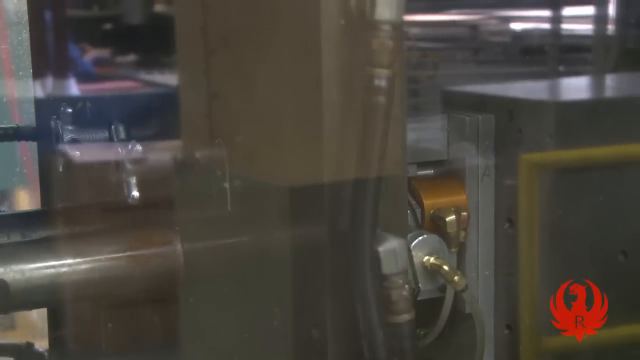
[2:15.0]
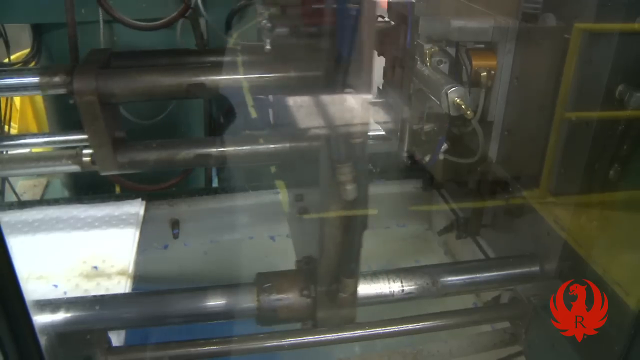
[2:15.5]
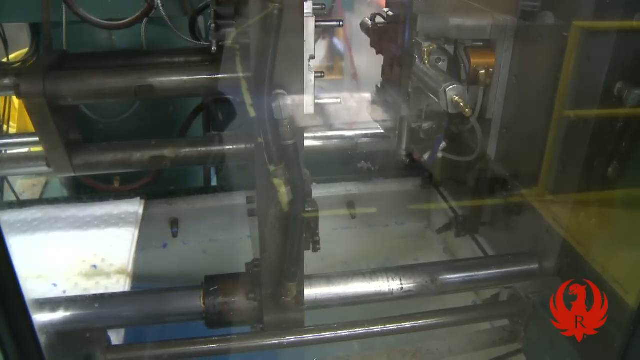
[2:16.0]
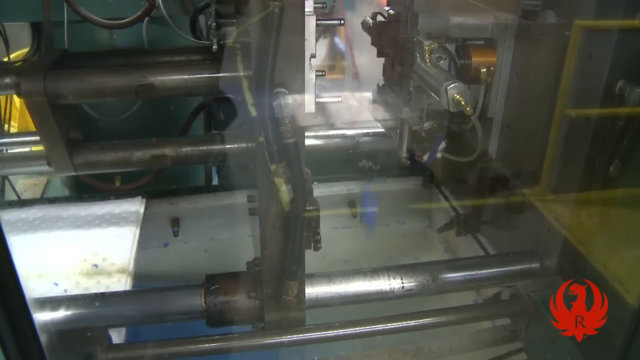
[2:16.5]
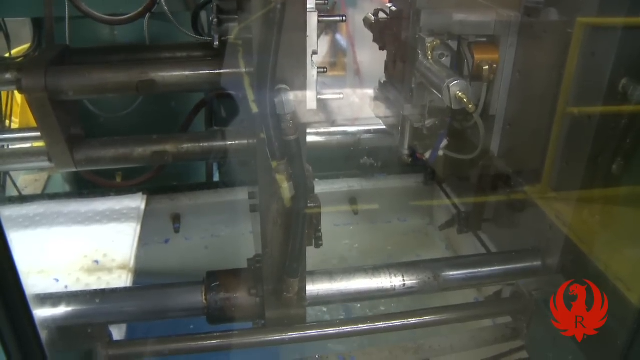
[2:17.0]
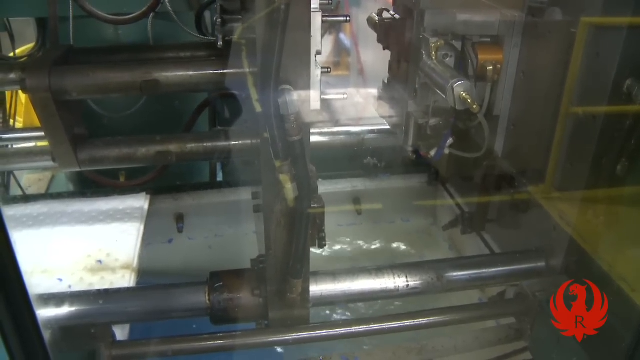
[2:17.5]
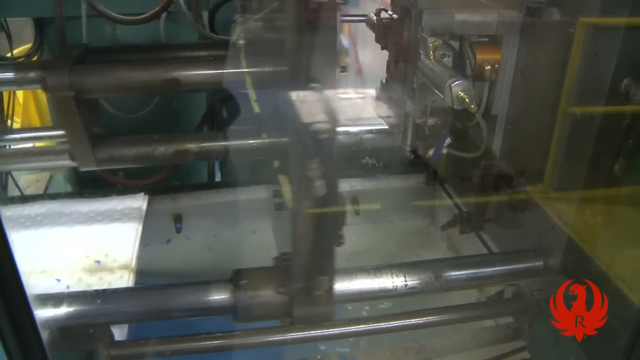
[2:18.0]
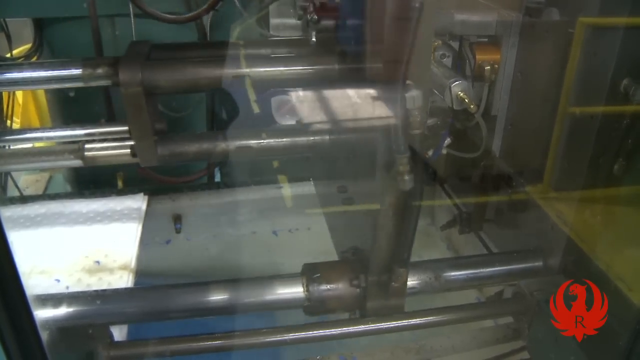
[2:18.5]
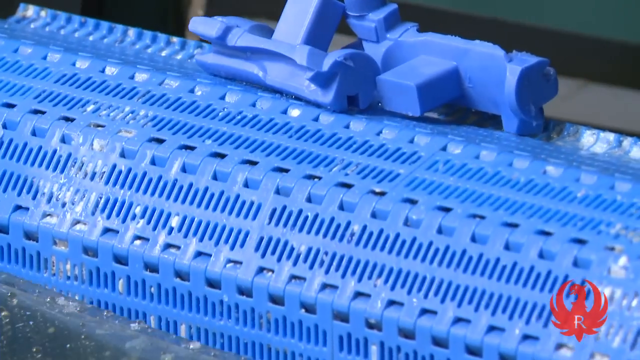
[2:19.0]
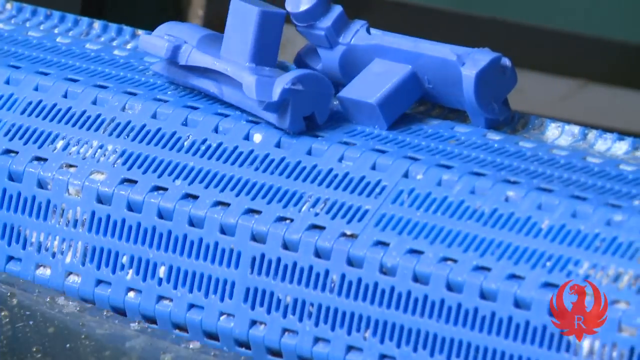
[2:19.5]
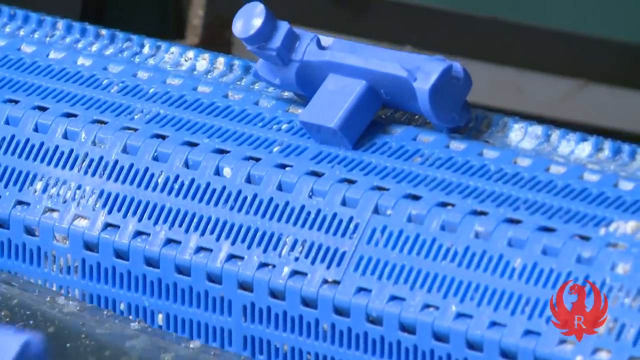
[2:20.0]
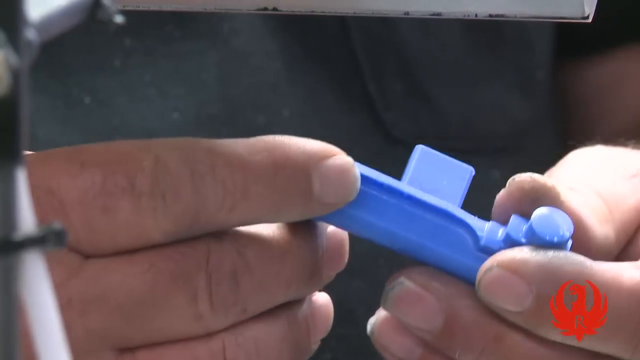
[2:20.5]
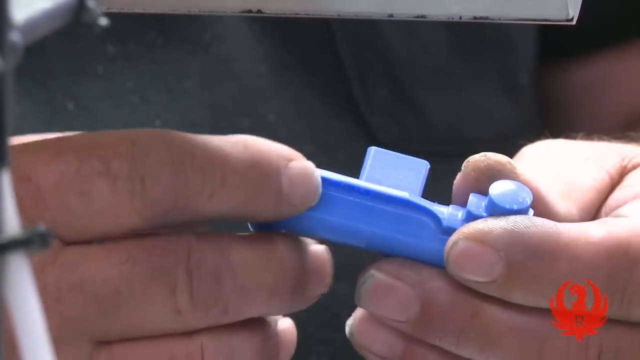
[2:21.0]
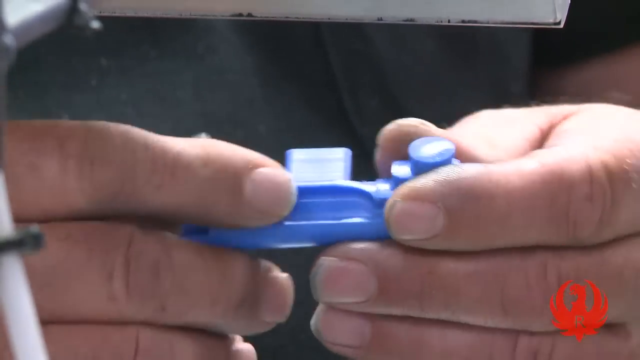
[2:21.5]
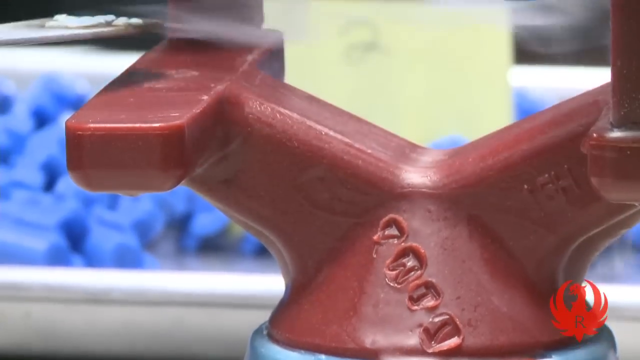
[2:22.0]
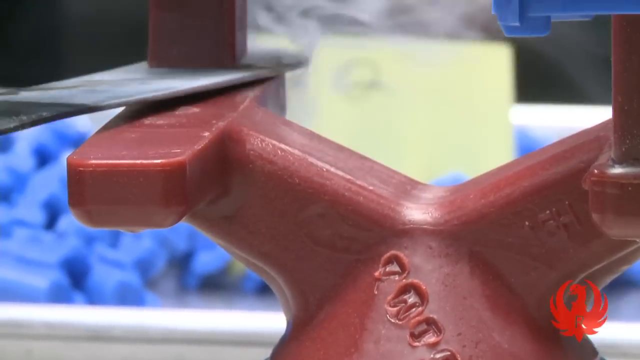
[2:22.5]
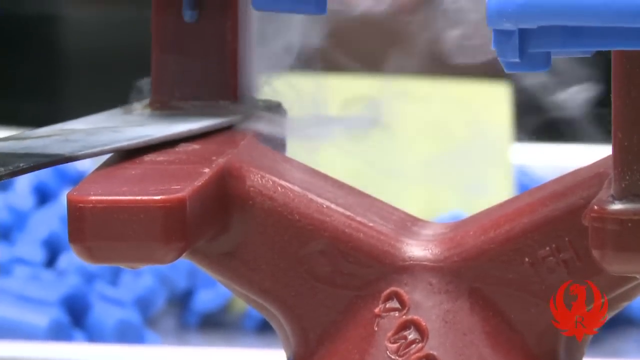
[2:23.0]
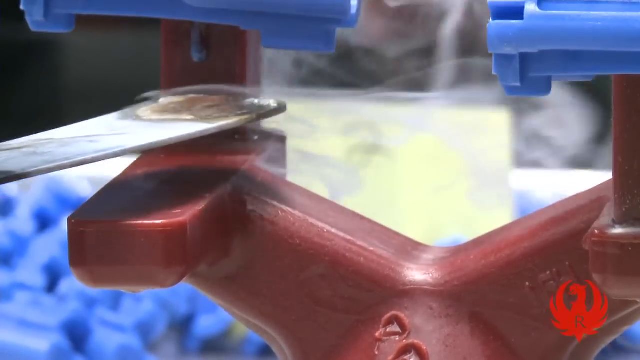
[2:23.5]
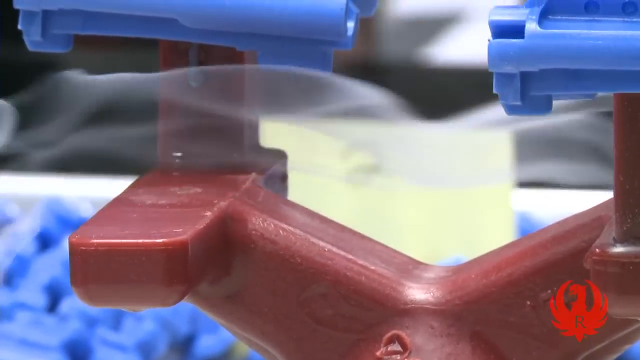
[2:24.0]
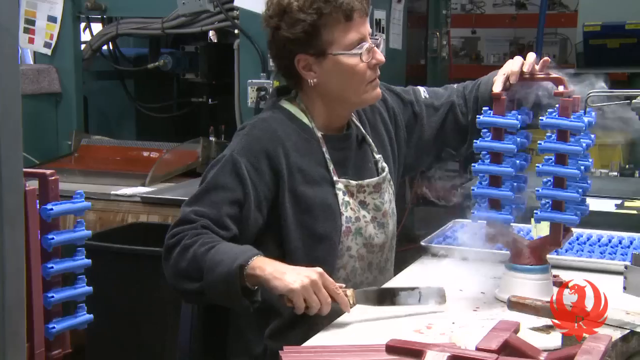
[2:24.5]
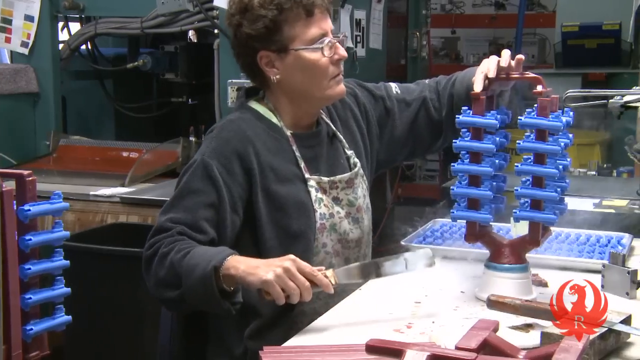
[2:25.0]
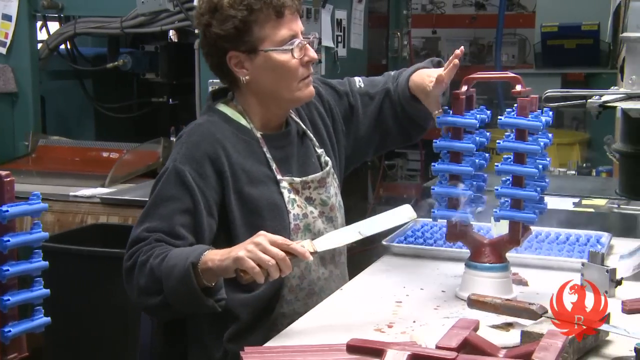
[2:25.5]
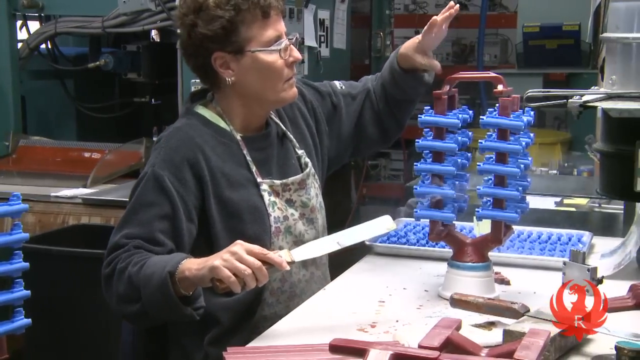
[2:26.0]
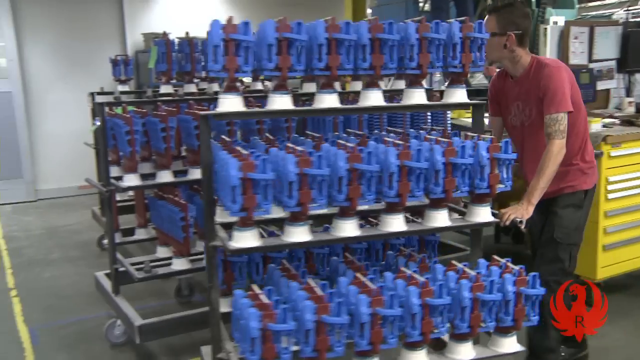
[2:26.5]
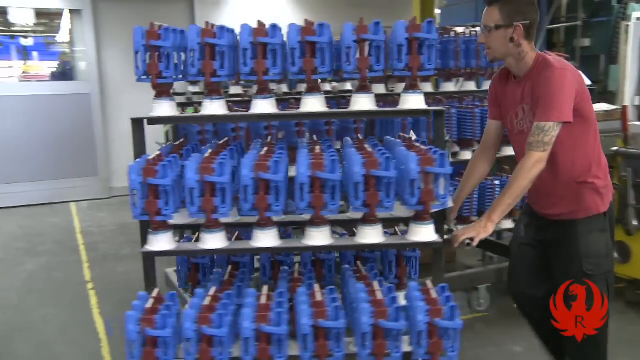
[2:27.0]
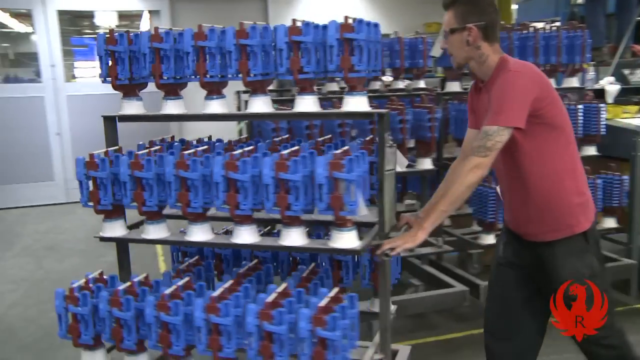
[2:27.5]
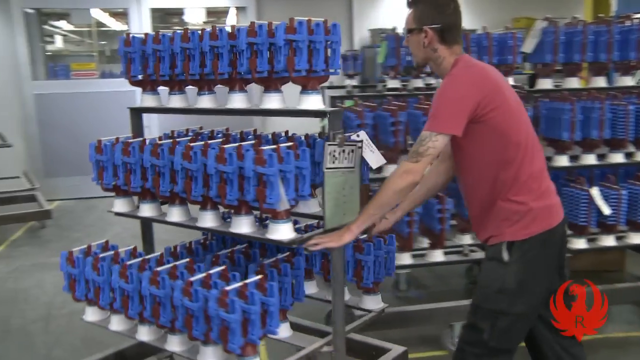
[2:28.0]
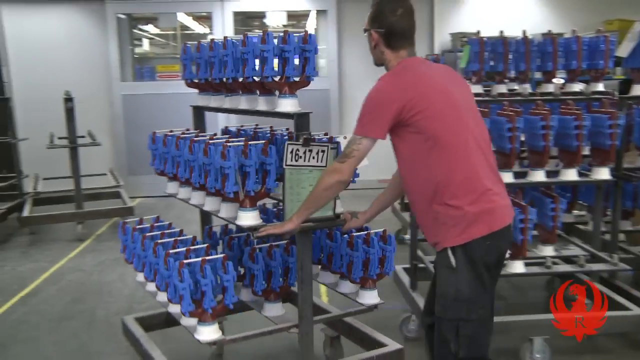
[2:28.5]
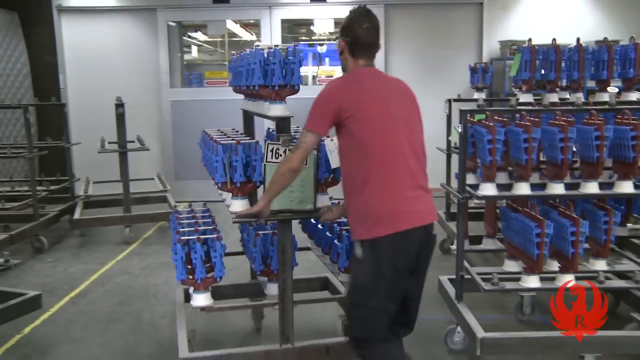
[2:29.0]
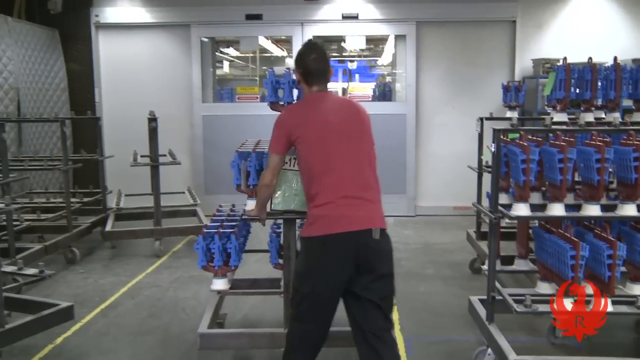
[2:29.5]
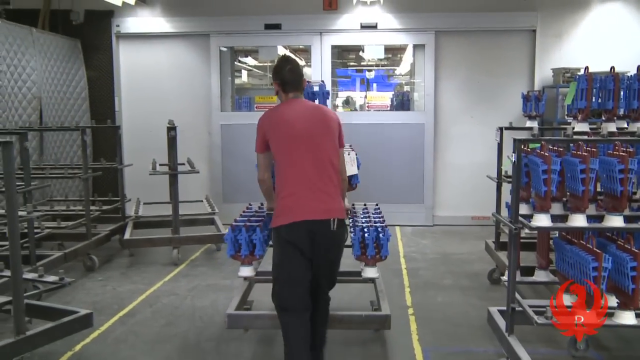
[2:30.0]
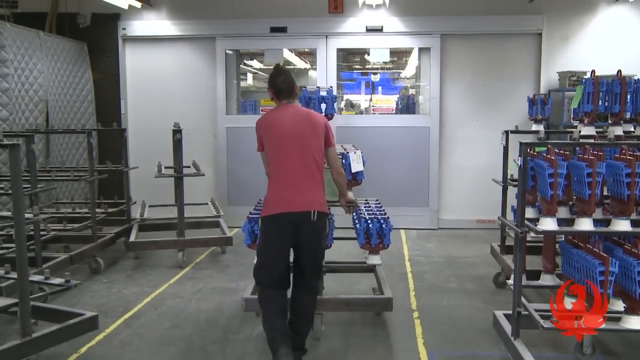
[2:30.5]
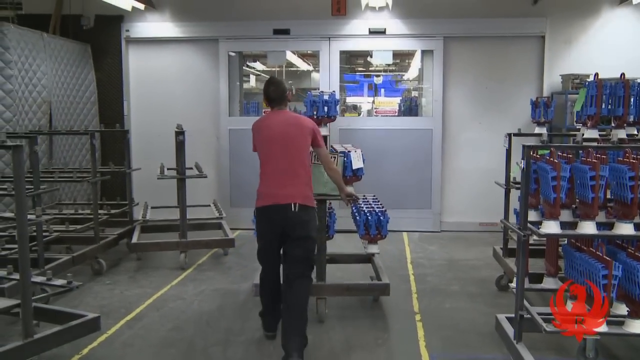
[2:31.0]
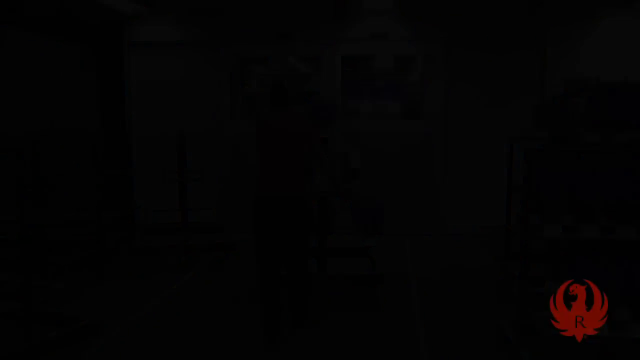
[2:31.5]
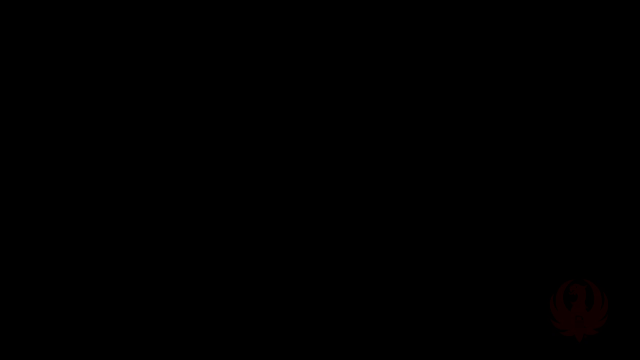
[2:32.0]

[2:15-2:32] Blue wax molds come off and are fused onto red wax, then put on carts and on top of the little white bases the man in the red shirt had earlier. The blue wax molds are moved to another part of the factory, where they possibly get rinsed off in water.